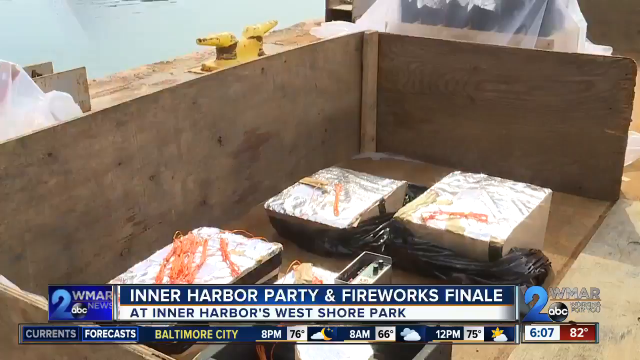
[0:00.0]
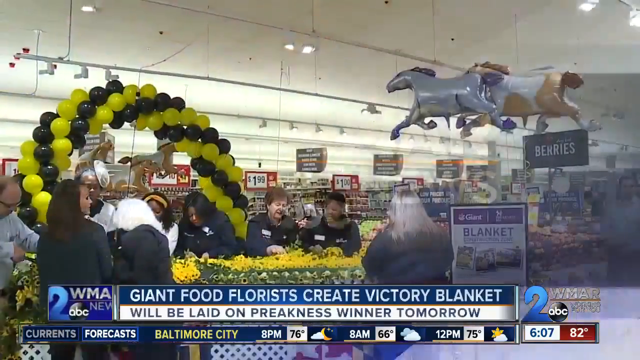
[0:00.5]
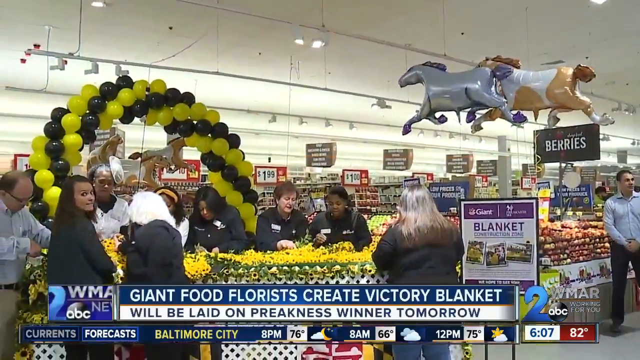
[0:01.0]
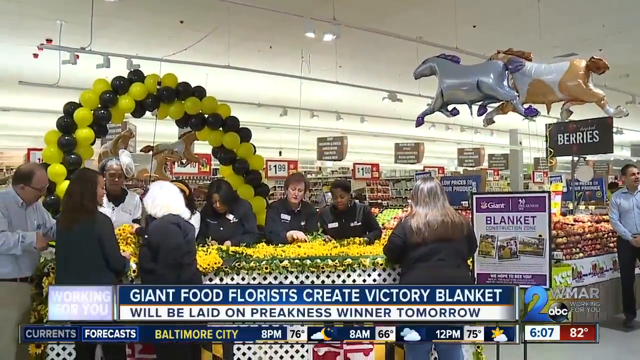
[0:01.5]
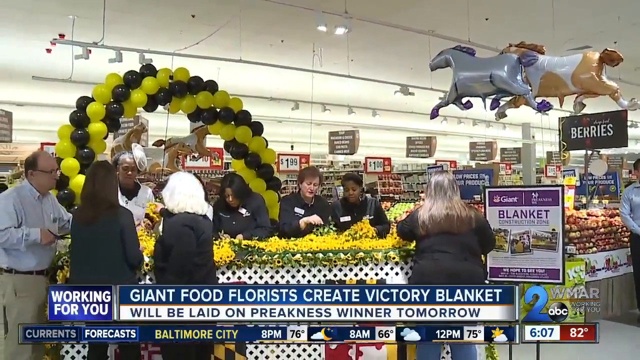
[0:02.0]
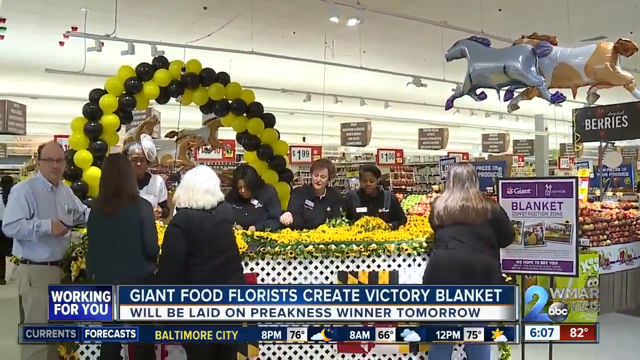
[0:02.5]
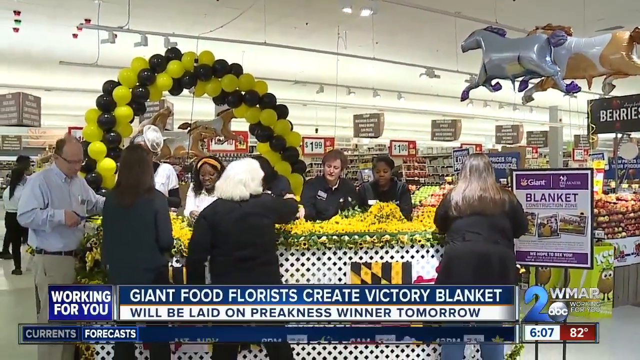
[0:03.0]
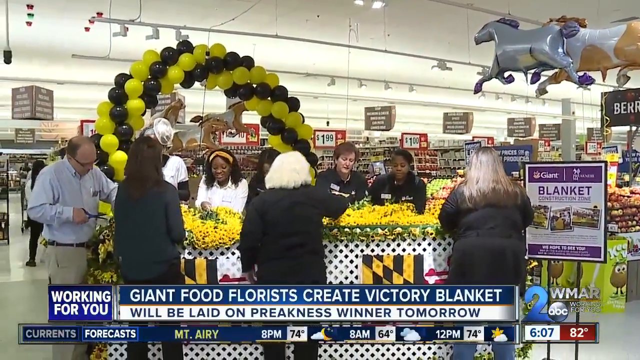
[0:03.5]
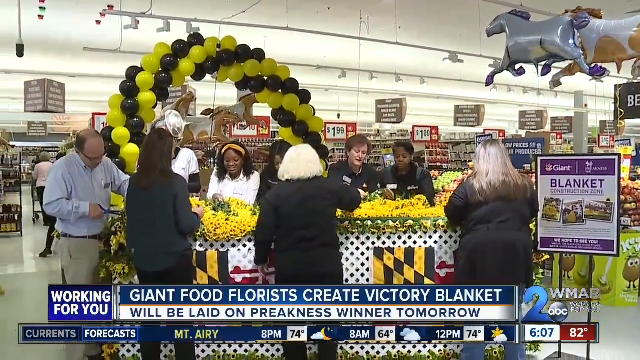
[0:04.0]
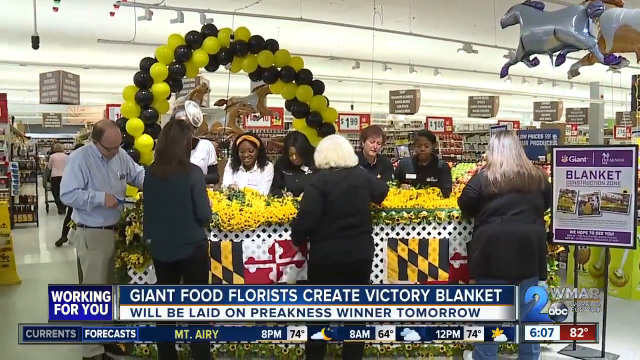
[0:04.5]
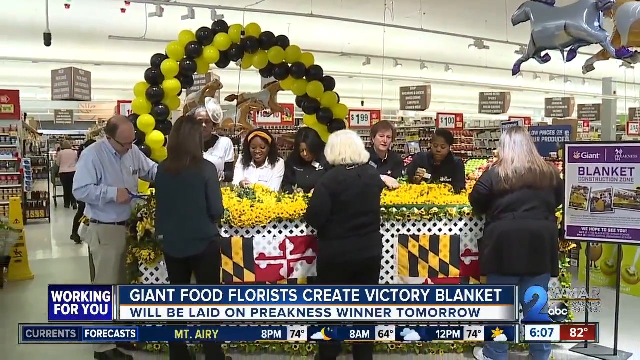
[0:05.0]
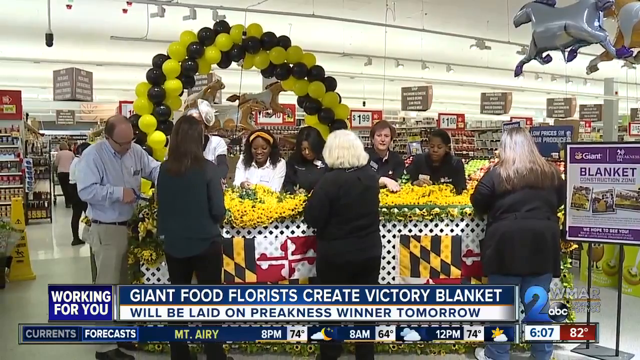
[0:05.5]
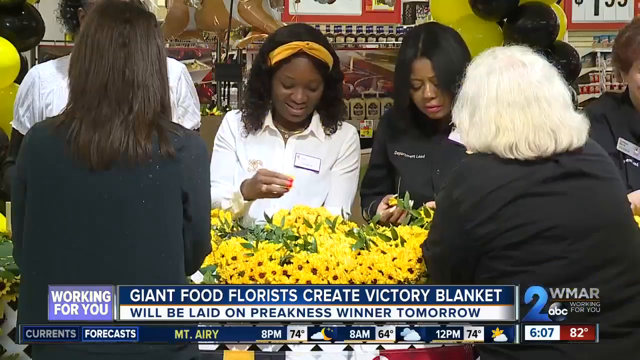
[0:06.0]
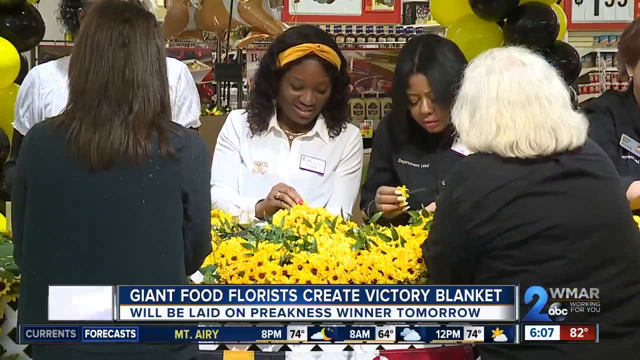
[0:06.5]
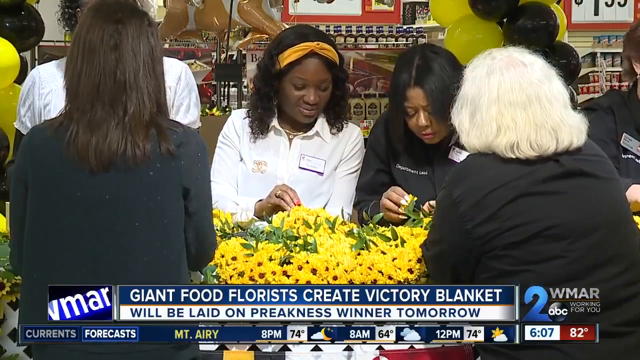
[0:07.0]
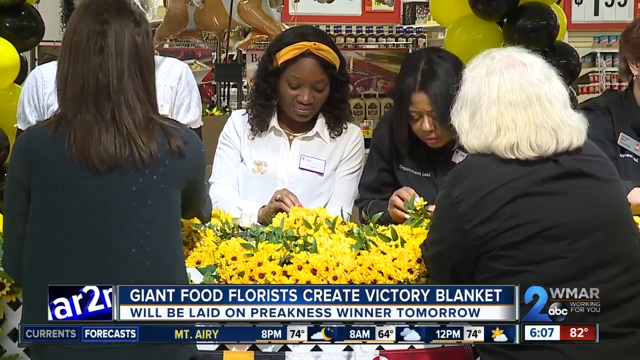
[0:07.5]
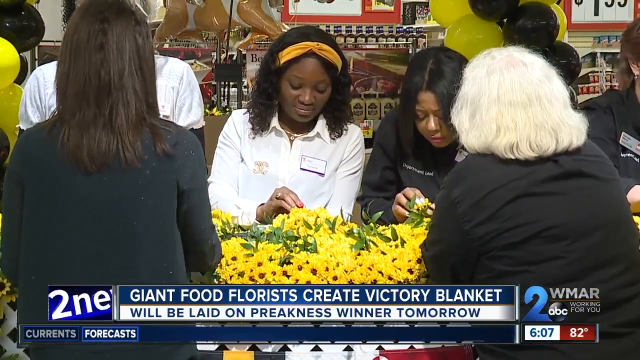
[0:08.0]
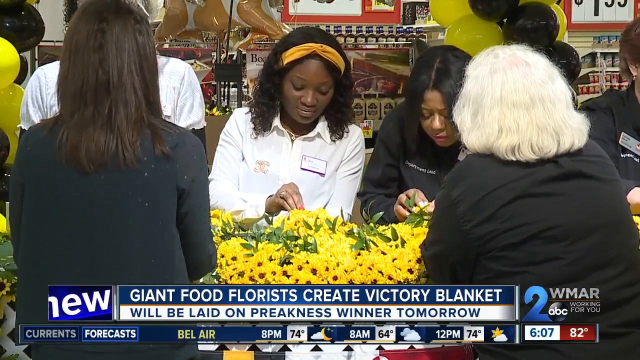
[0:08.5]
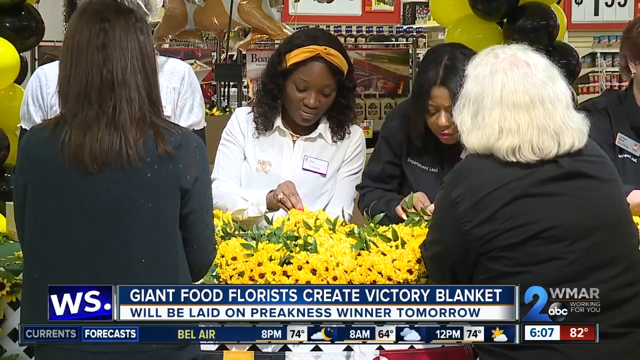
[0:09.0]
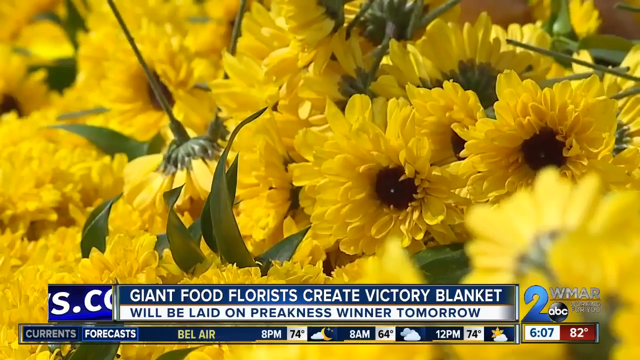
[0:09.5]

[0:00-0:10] A news-style report takes place in a grocery store, with a title reading "giant food florists create victory blankets that will be laid on". Many florists work on giant flower baskets, creating the victory blanket in a sort of grocery store style setting. Apart from the florists working on the flowers, the only other people shown are a few shoppers in the grocery store.